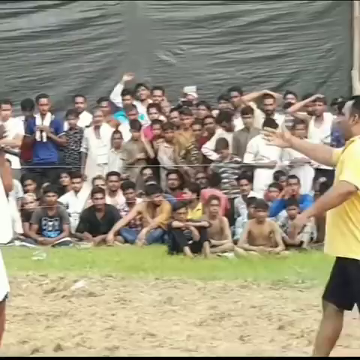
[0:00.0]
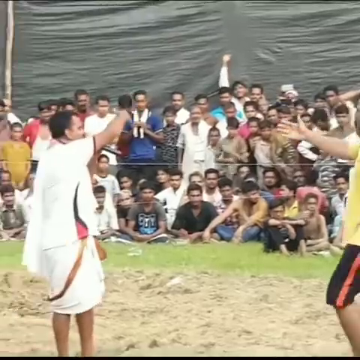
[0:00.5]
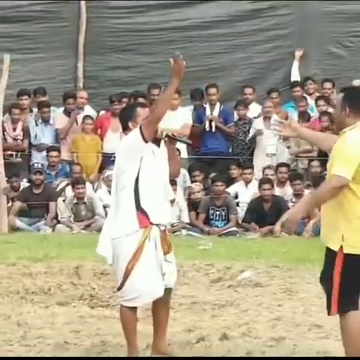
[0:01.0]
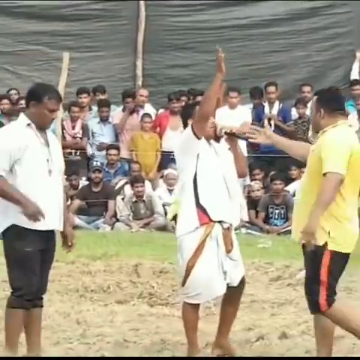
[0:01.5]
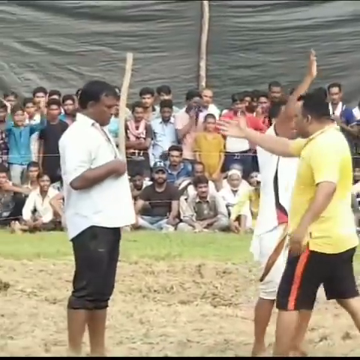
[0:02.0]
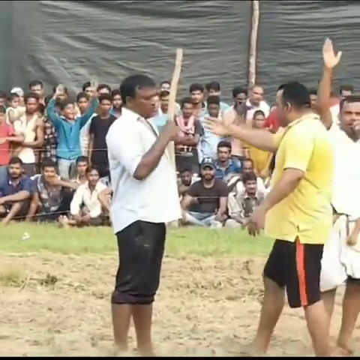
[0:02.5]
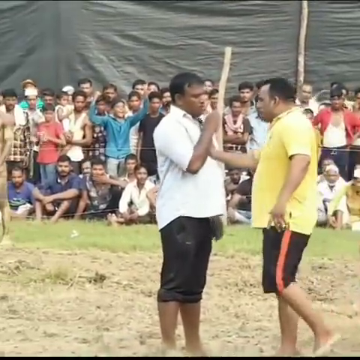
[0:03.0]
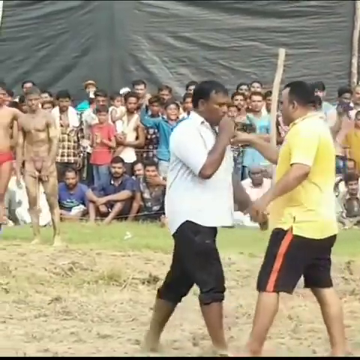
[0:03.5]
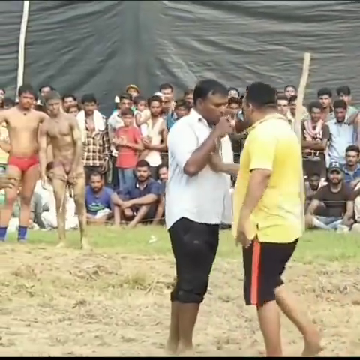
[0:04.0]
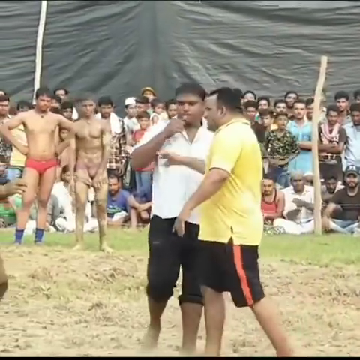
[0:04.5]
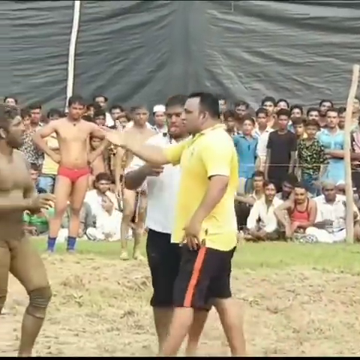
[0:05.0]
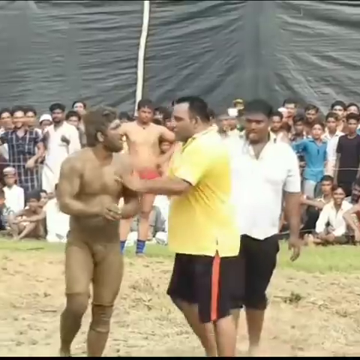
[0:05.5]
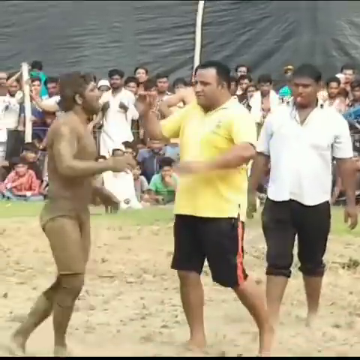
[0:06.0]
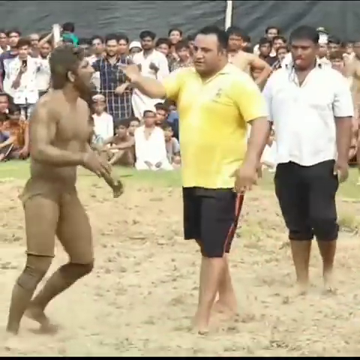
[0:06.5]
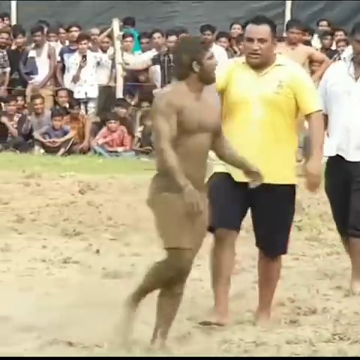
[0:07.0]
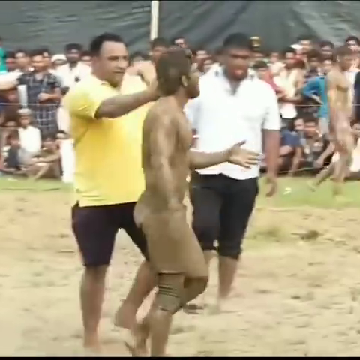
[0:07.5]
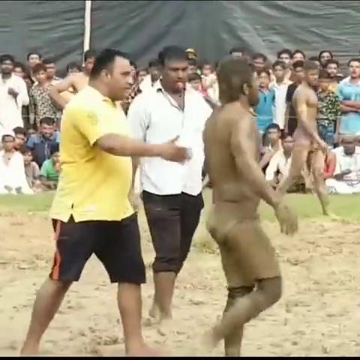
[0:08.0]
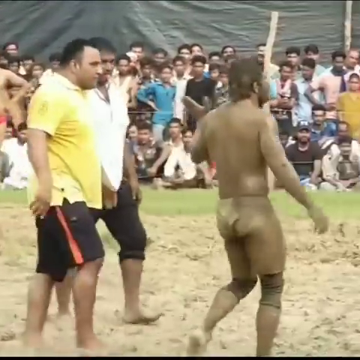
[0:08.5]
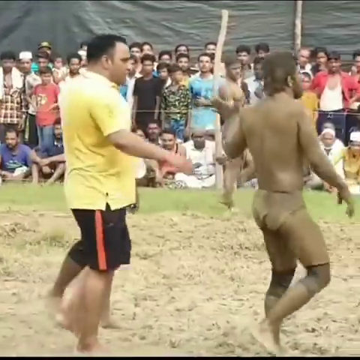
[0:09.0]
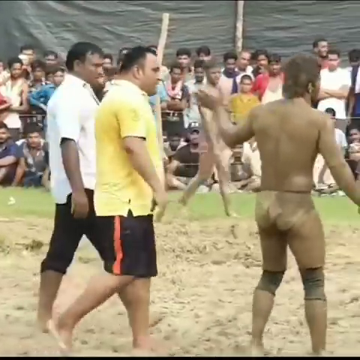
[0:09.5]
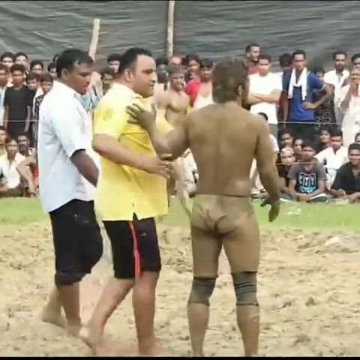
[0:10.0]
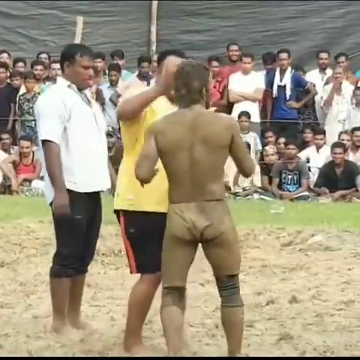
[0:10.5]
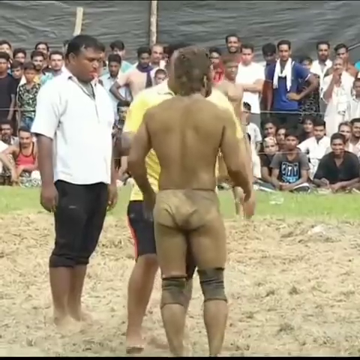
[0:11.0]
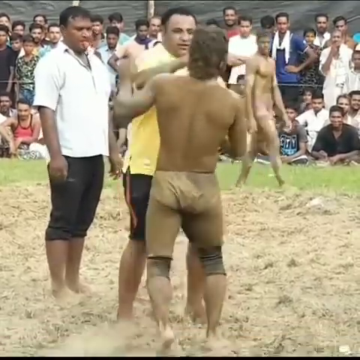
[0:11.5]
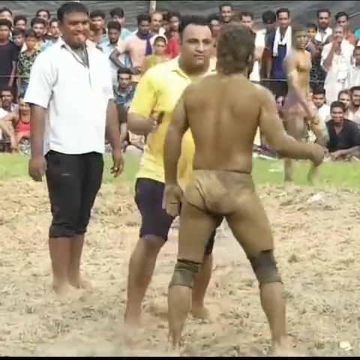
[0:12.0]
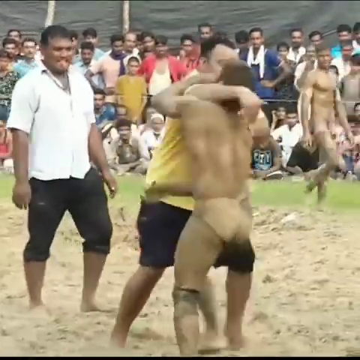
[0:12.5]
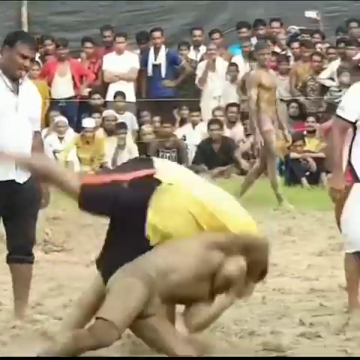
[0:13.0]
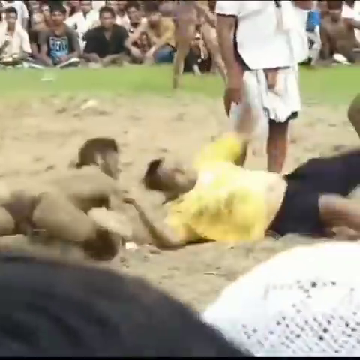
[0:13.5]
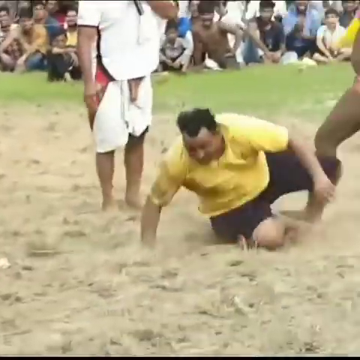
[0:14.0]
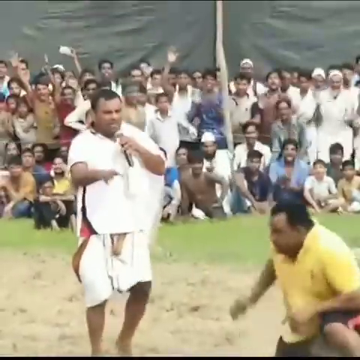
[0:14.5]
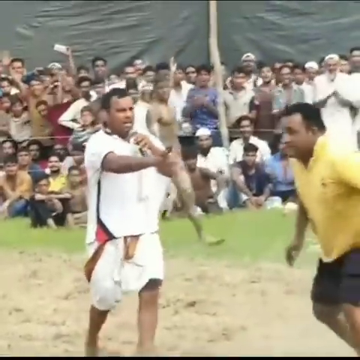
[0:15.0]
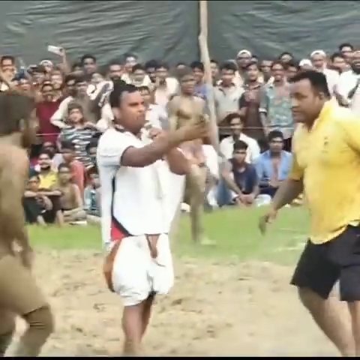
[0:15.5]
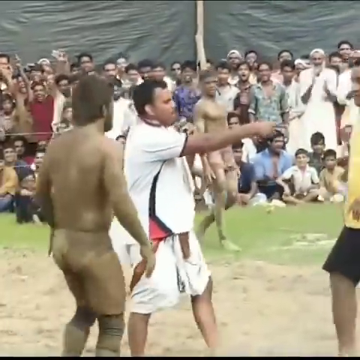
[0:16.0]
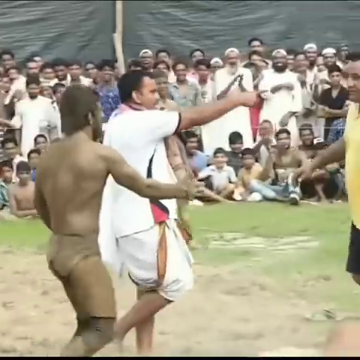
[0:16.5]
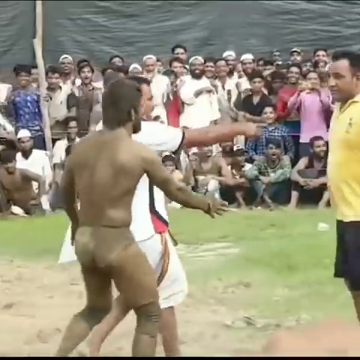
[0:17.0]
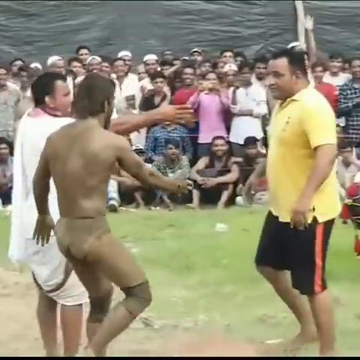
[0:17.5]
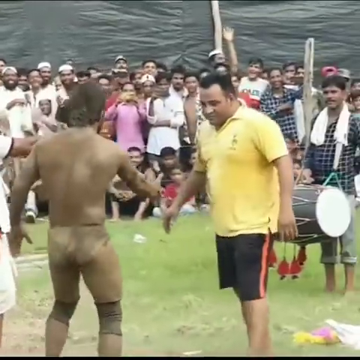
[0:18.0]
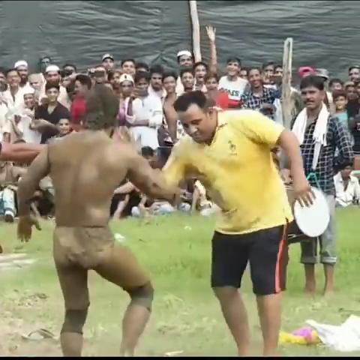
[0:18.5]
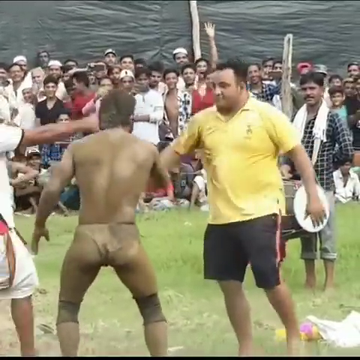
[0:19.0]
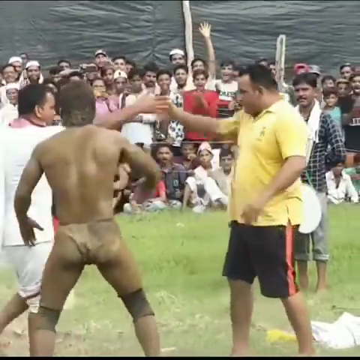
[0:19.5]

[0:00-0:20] An outdoor event takes place on a grassy field, where people have gathered to form a crowd of spectators. The spectators are all male; some of the men are seated on the ground with their legs crossed, while other men stand behind them to watch. The grass is green but has a browner, slightly muddier patch in the middle. Two men stand face to face: the man on the left wears a white shirt and black pants, and the man on the right wears a yellow t-shirt and black knee-length pants with an orange vertical stripe. The man in yellow shoves at the man in the white shirt, then shoves at another man who looks quite muddied and wears a pair of close-fitting brown pants. They start to wrestle, and the audience claps in approval as one of the men flips the other. Another man, dressed in a white top and white pants, might be the referee.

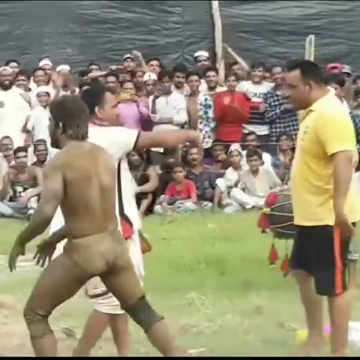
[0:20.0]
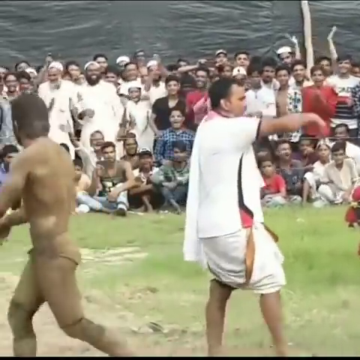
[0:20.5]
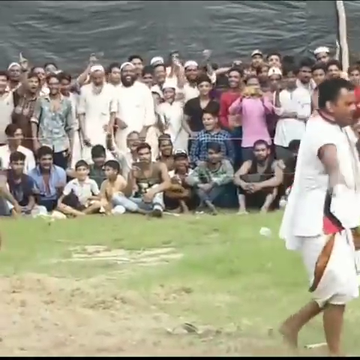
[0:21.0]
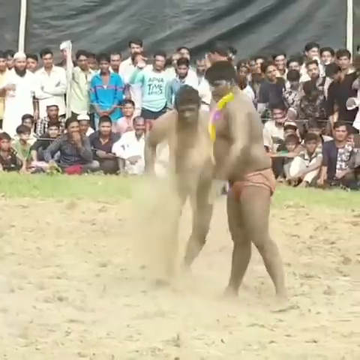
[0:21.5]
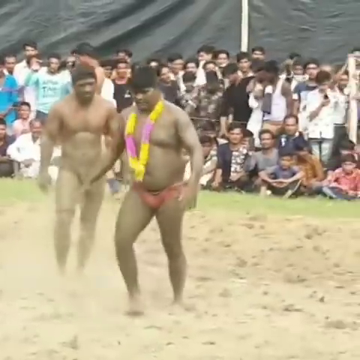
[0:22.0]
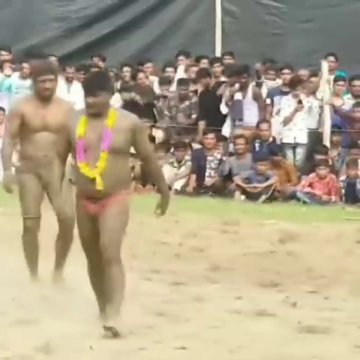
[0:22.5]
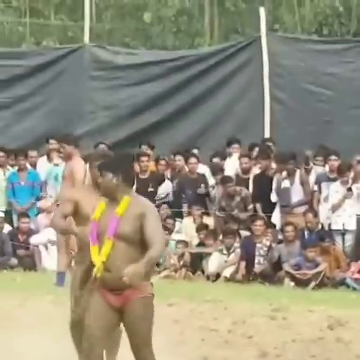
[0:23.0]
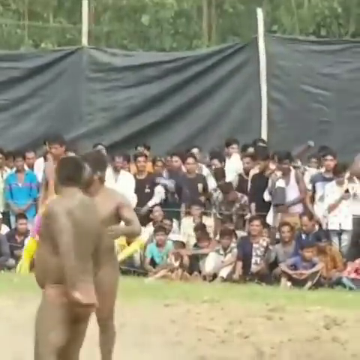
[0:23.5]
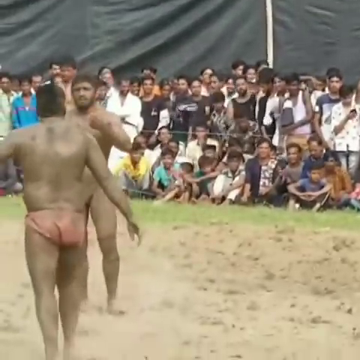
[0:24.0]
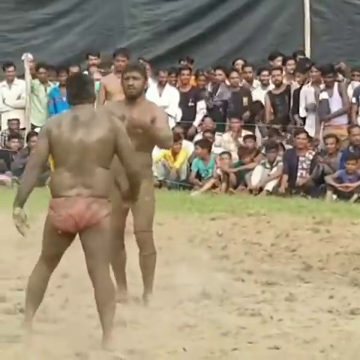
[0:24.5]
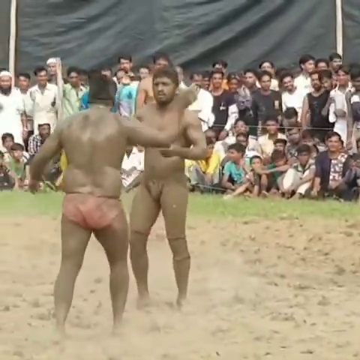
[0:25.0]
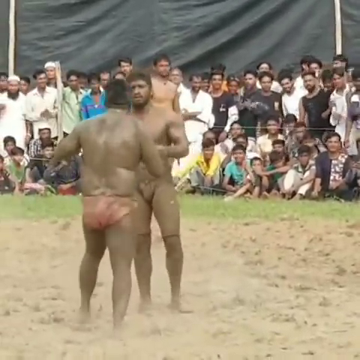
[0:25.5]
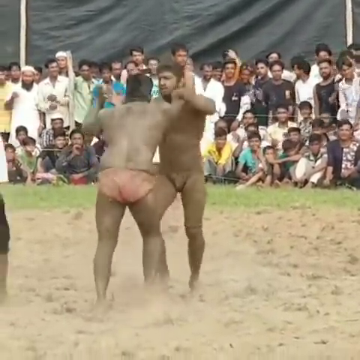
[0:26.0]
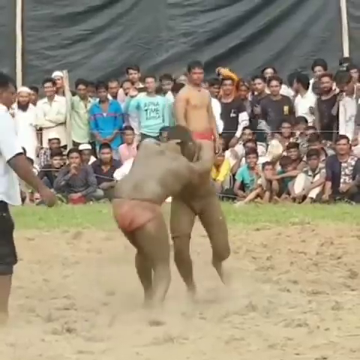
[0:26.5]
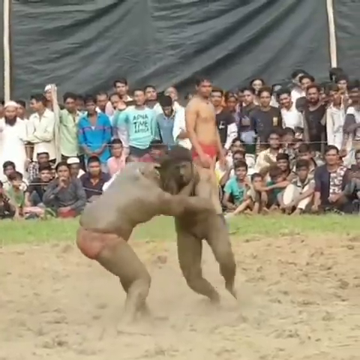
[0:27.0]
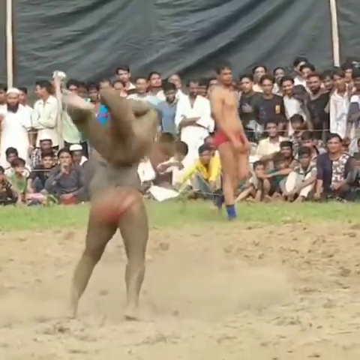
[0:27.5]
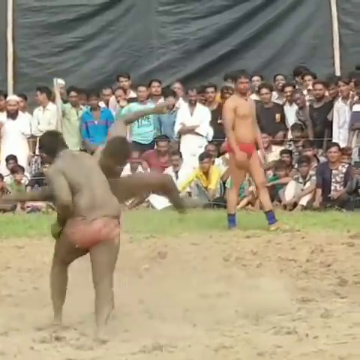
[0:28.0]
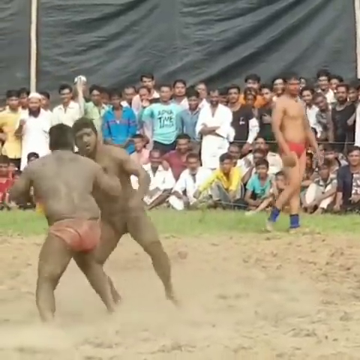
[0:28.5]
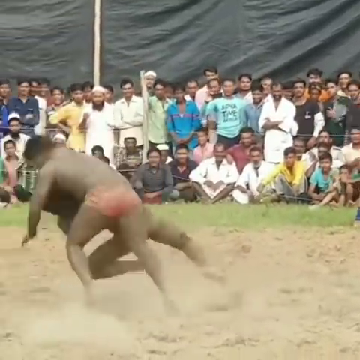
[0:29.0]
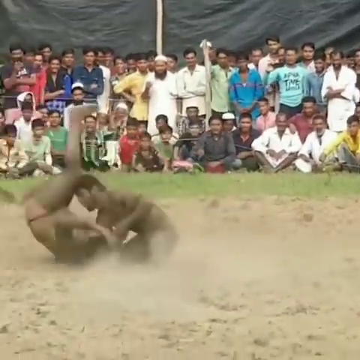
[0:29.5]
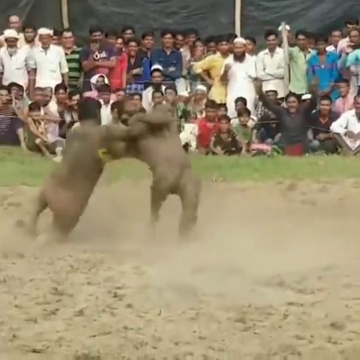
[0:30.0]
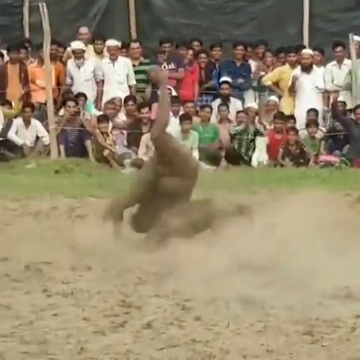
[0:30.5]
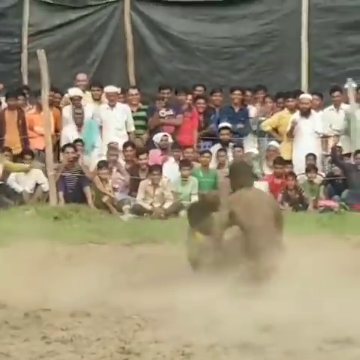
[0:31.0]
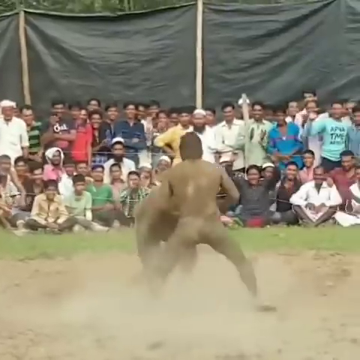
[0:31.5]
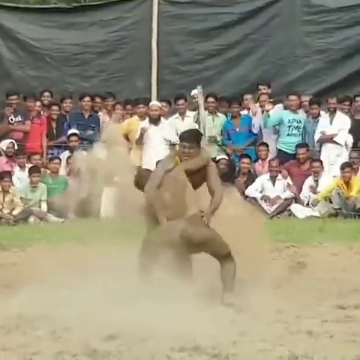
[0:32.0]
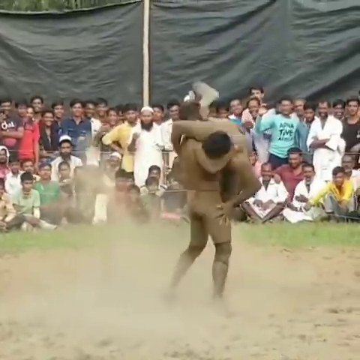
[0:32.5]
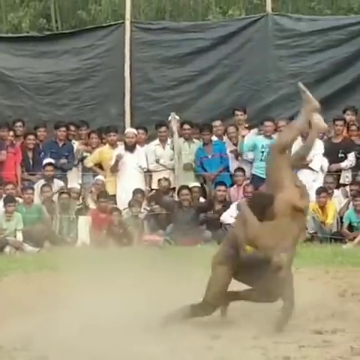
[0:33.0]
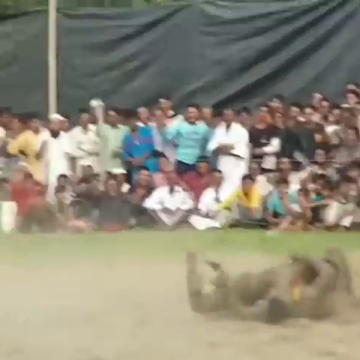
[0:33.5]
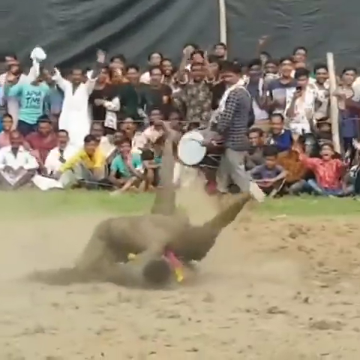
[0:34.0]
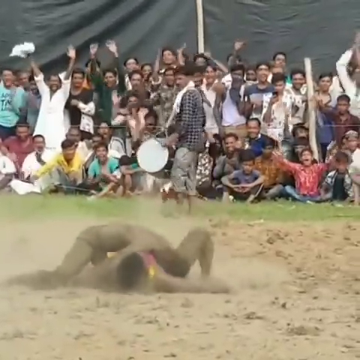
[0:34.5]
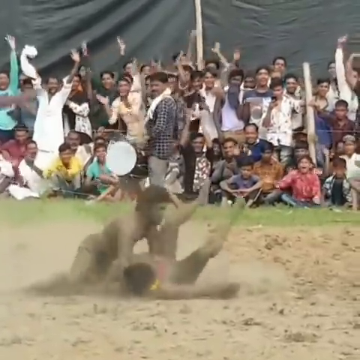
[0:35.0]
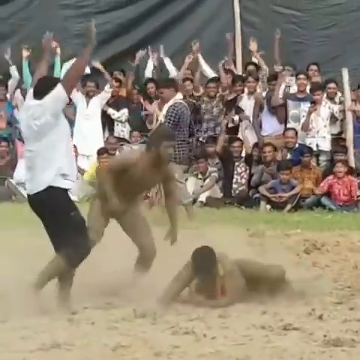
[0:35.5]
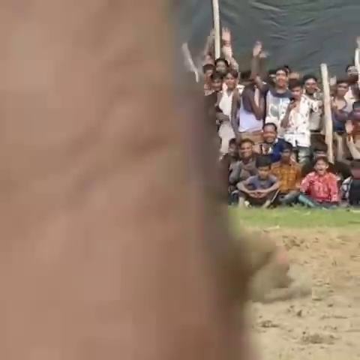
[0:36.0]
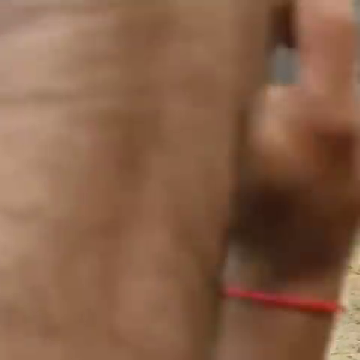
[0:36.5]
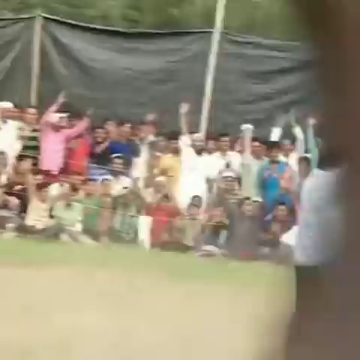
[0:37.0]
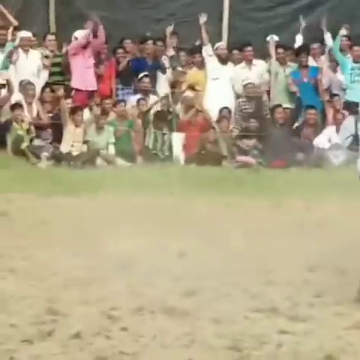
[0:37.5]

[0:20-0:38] A local wrestling match is in progress outdoors on a sandy patch, with spectators watching in the background. Two men are in the frame: one wears flesh-colored, tight-fitting knee-length shorts, while the other wears only a pair of speedo pants and has a pink and yellow flower garland around his neck. The men face each other and start to wrestle, grabbing at each other with their hands. They wrestle in the dust, taking each other down, lifting each other and body-slamming each other, with dust and sand scattering around them. The man in the flesh-colored shorts eventually body-slams and overpowers the man in the speedo pants, who tries but fails to break out of his grip. The crowd waves their hands in applause as the man in the flesh-colored, tight-fitting shorts wins the match.